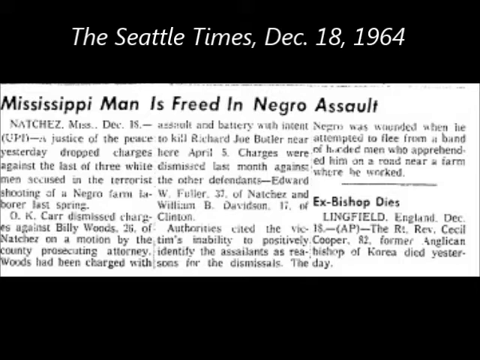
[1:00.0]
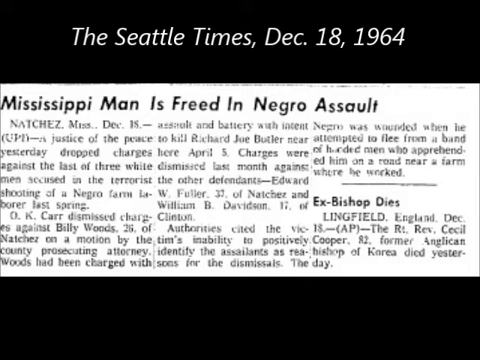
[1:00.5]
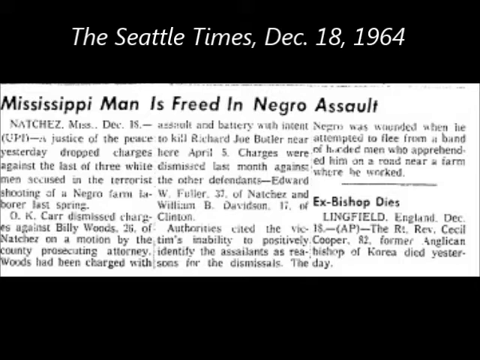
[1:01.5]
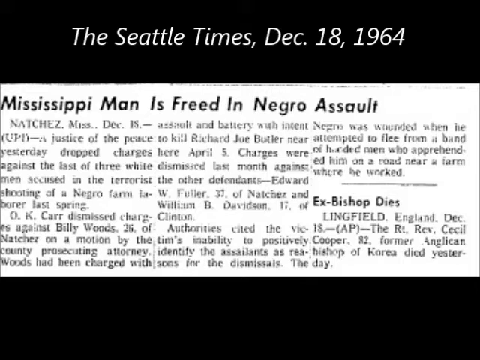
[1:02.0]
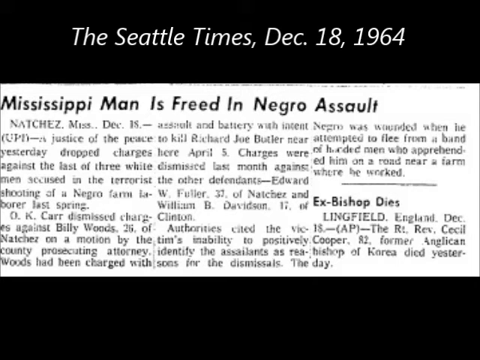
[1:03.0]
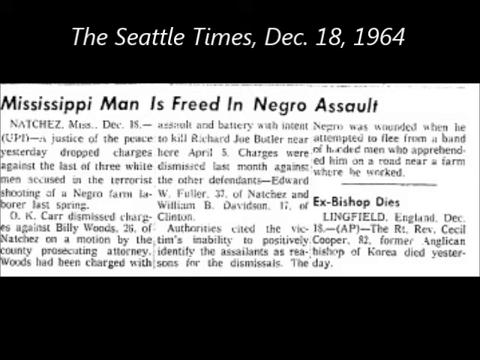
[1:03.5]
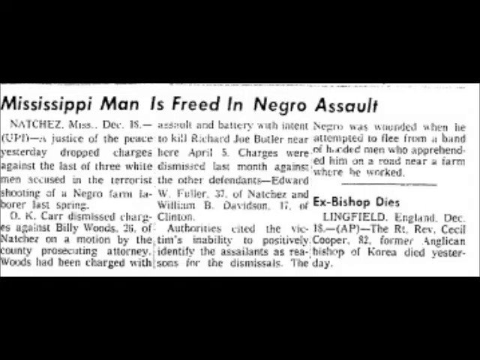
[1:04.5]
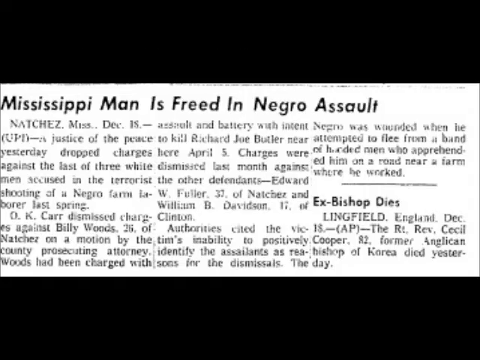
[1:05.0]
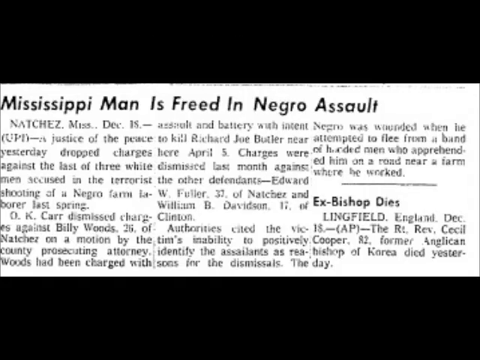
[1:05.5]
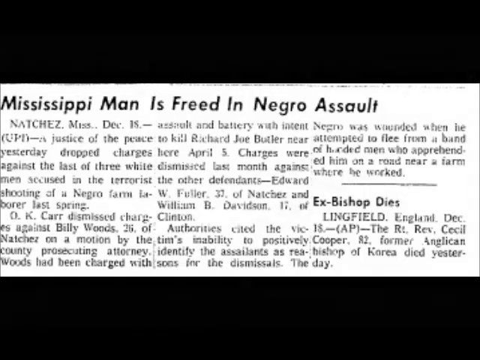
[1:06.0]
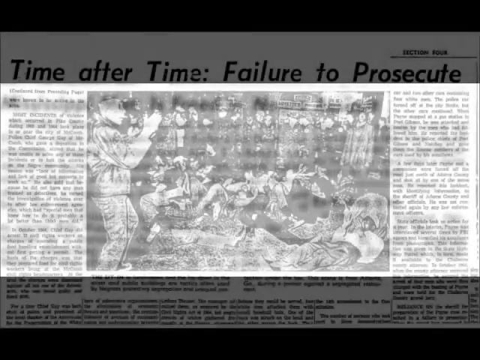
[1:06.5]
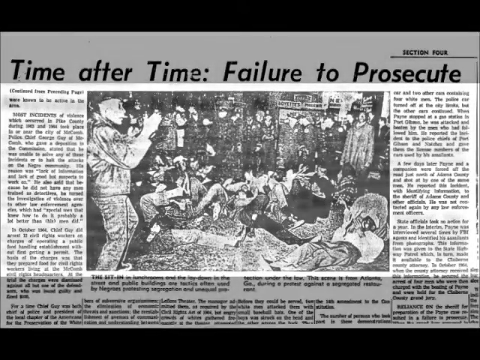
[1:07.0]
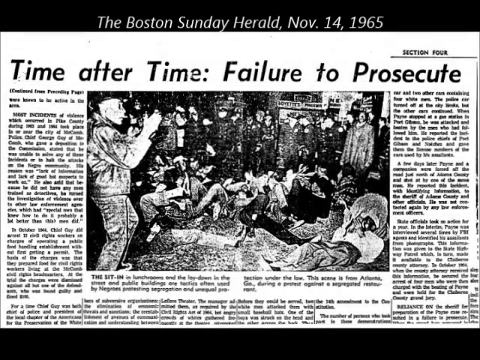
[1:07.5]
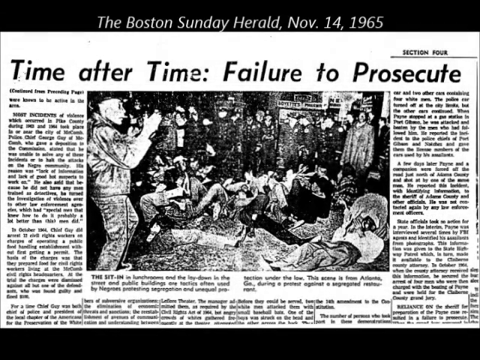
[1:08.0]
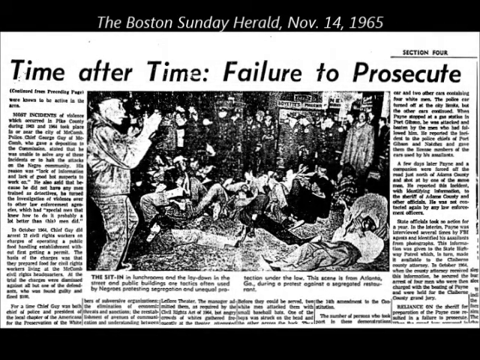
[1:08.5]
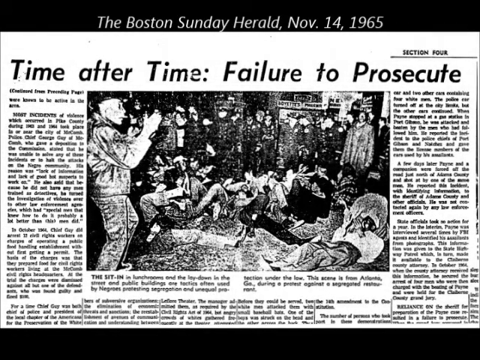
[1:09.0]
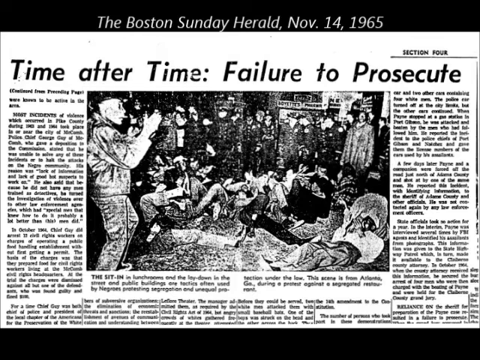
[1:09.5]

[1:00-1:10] The Seattle Times article from December 18, 1964, headlined "Mississippi man is freed in Negro assault," is on screen. The article reads: "A justice of the peace yesterday dropped charges against the last of three white men accused in the terrorist shooting of a Negro farm laborer last spring. O.K. Carr dismissed charges against Billy Woods, 26 of Natchez," and continues, "Charges were dismissed last month against the other defendant, Edward W. Fuller, 32 of Natchez and William B. Davidson, 17 of Clinton," and "The Negro was wounded when he attempted to flee." Another small article is headlined "Ex-bishop dies" and concerns the Reverend Cecil Cooper, 82, who died in Lingfield, England. After this, another newspaper clipping appears, from the Boston Sunday Herald, November 4th, 1965, with the headline "Time after time: failure to prosecute." It has a grainy black-and-white photograph in which there appear to be African American men on their backs on the ground. They seem to be surrounded by many men in uniforms that look to be police. On the left is a white man with a cigarette hanging out of his mouth; it looks like he is taking a photograph. His hands and arms are up, his knee is cocked forward slightly, and he wears long sleeves and long pants.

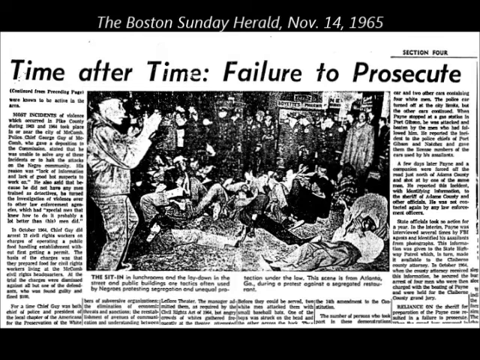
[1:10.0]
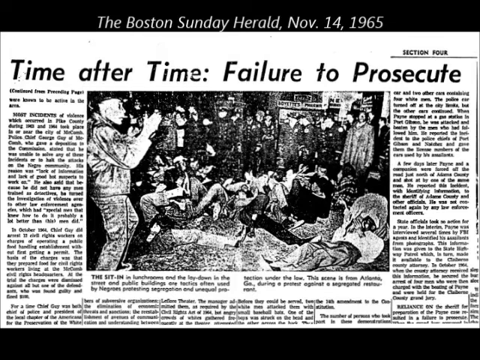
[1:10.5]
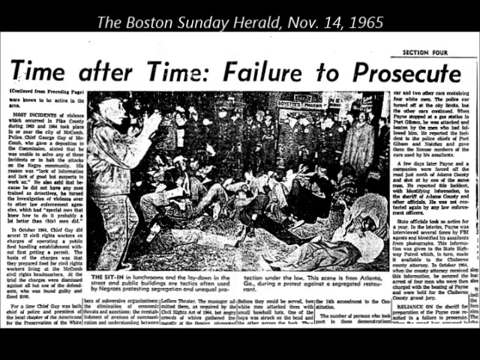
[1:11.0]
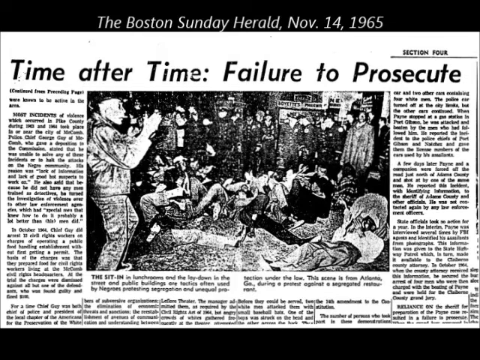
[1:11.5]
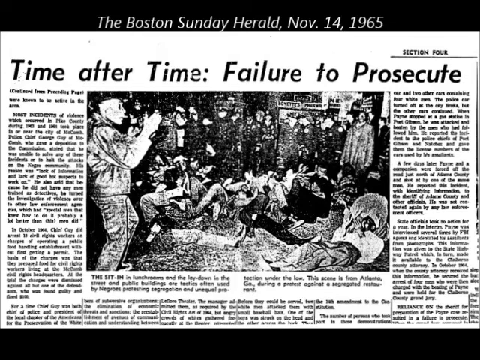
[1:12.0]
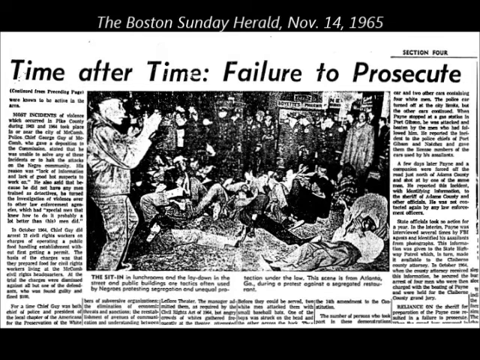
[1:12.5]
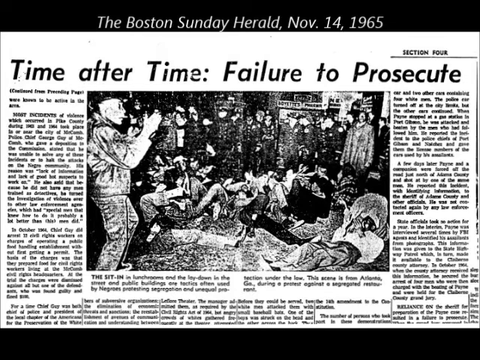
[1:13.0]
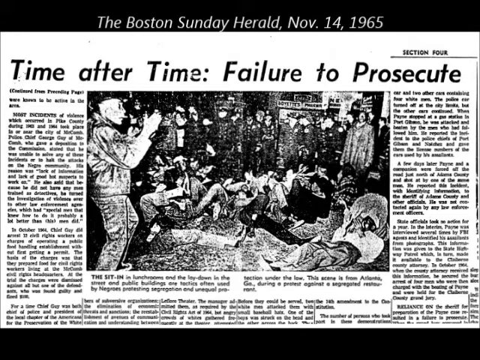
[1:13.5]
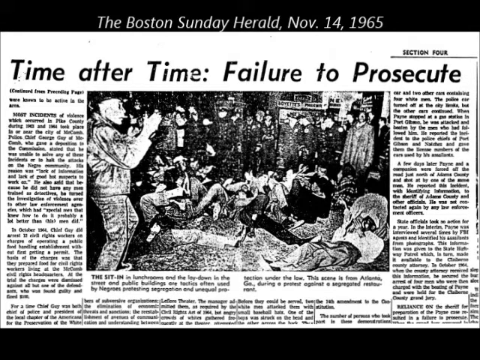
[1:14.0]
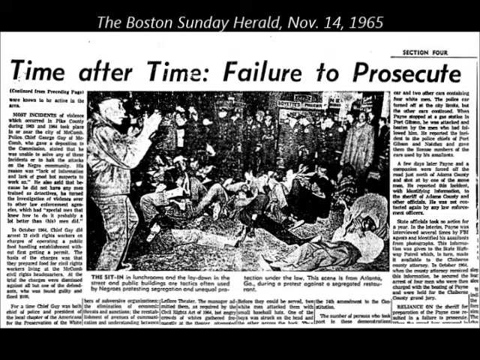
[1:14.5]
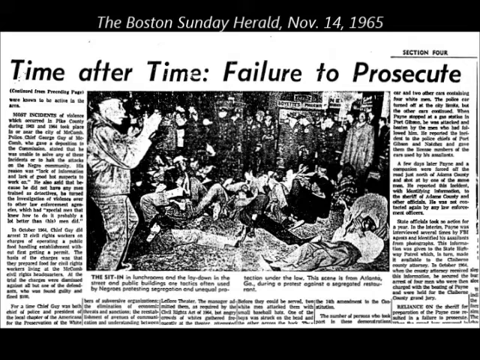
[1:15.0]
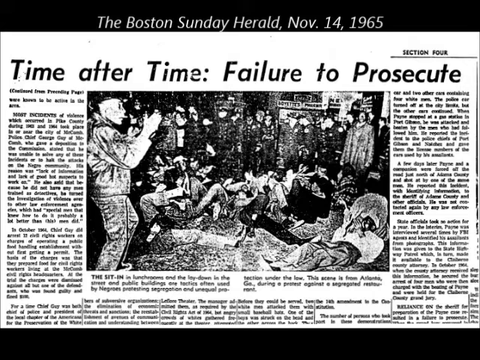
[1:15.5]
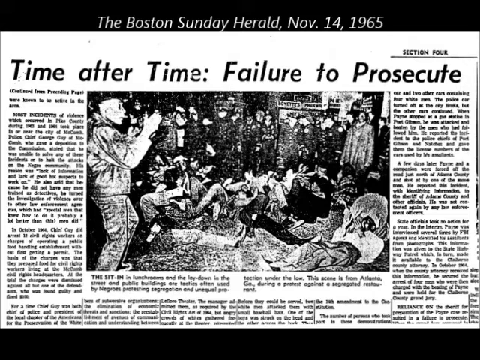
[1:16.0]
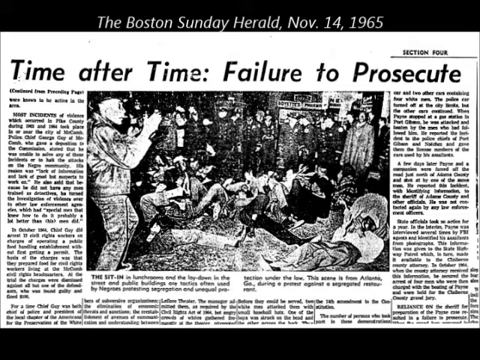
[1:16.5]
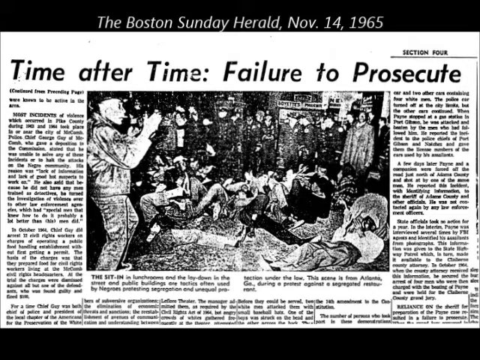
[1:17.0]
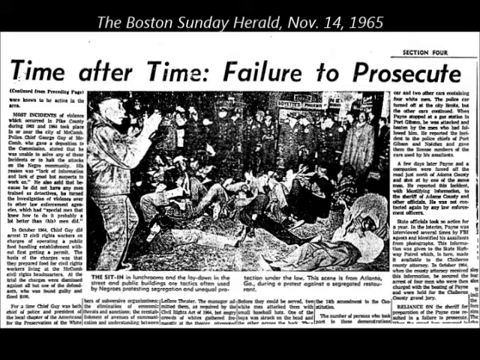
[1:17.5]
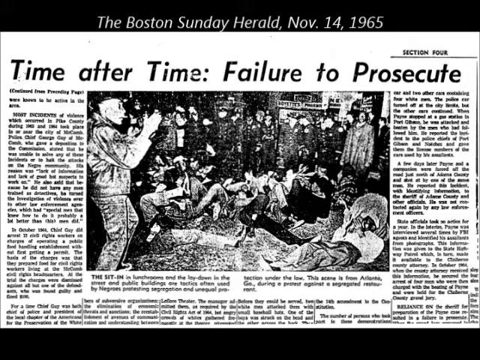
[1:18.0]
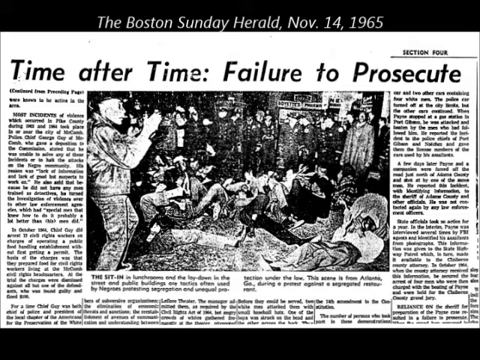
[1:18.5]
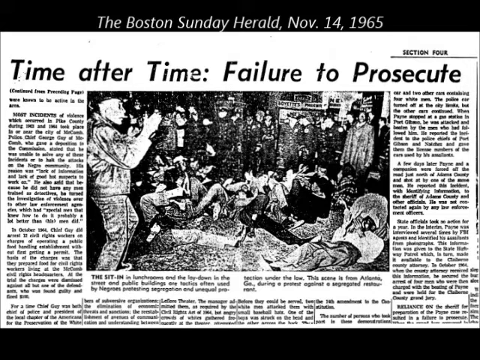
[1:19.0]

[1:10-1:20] The Boston Sunday Herald, November 14th, 1965, section four, is shown with the headline "Time after time failure to prosecute." The print is blurry and hard to decipher, but a large black-and-white photo is in the center of the page, and the words "The Sit-In" can be made out. There appear to be some African-American men on the ground, lying down or sitting, who seem to be staging a demonstration. A jumble of legs is visible in the photograph, though it is hard to make out much detail. In the background are many uniformed men in coats with rows of buttons, probably gold; they appear to be white and are possibly police officers. They all wear hats and surround the men demonstrating the sit-in. In the foreground on the left is a white man who appears to be holding something up, perhaps a camera, possibly taking a photo of the sit-in. He has a cigarette coming out of his mouth and wears pants and a jacket.